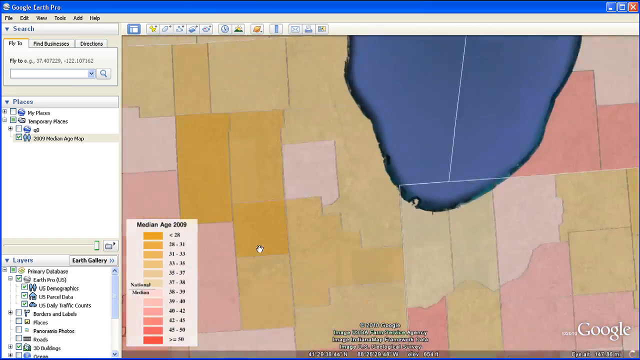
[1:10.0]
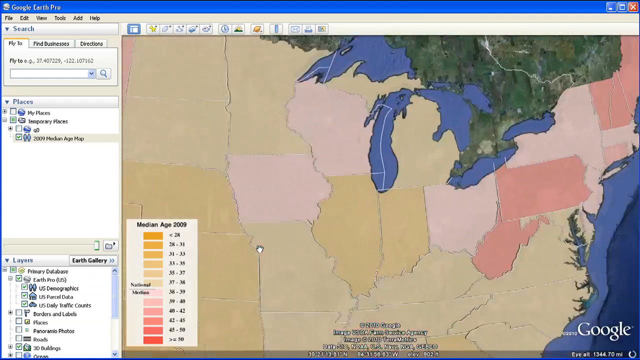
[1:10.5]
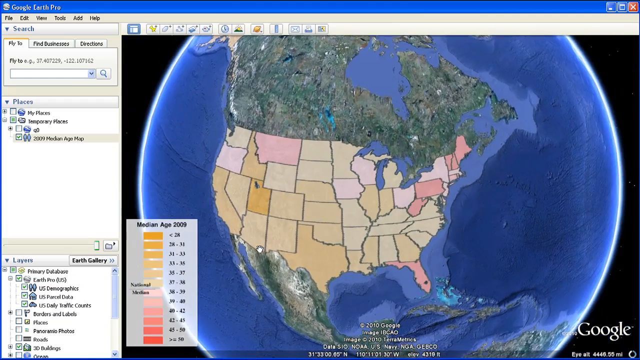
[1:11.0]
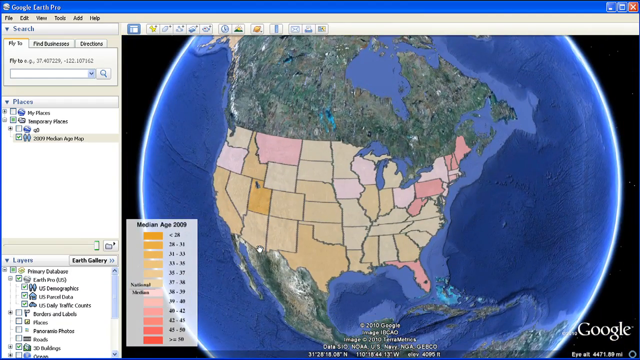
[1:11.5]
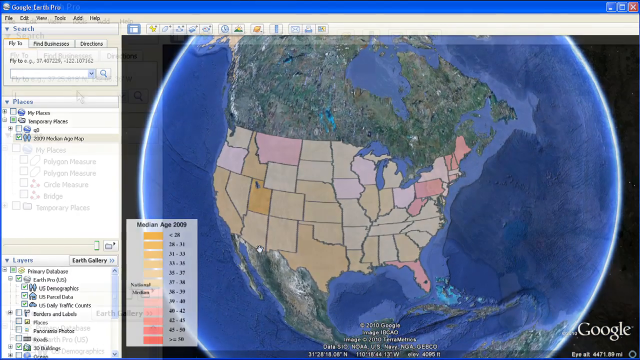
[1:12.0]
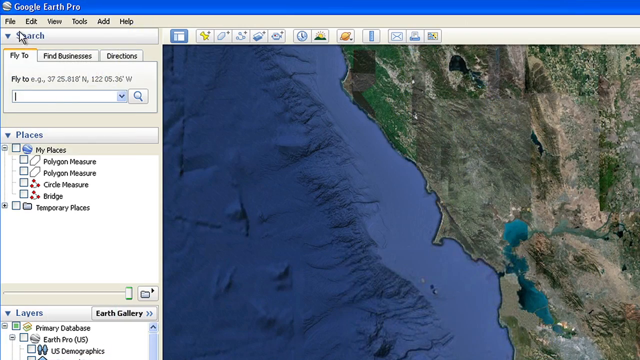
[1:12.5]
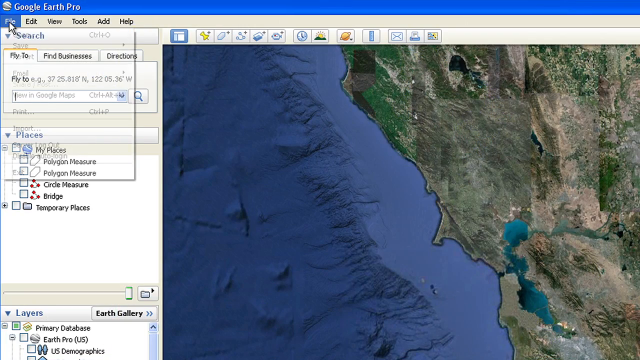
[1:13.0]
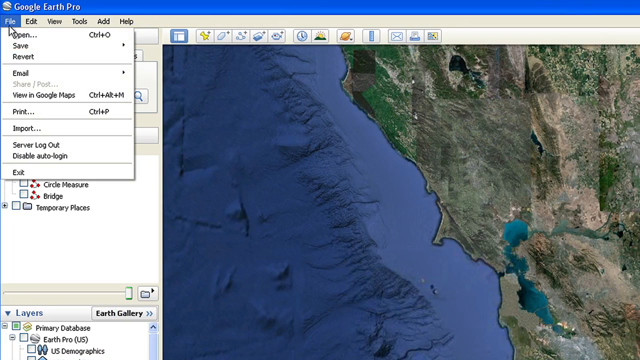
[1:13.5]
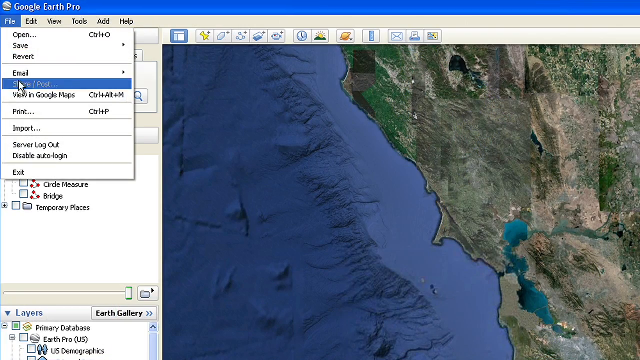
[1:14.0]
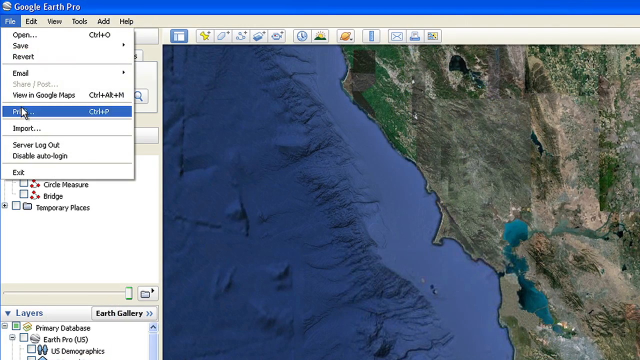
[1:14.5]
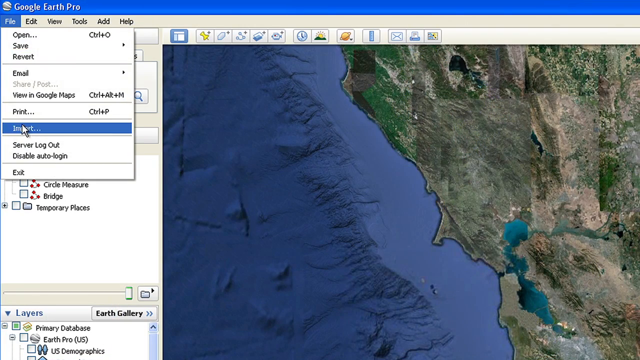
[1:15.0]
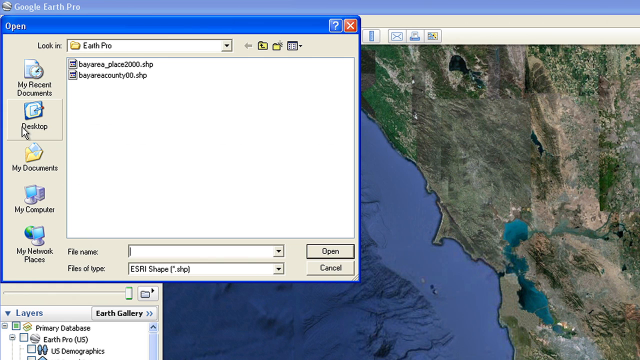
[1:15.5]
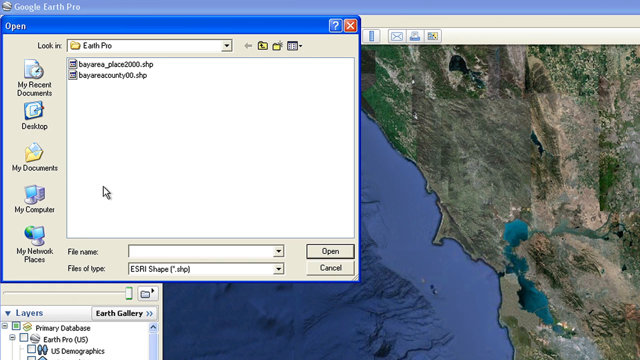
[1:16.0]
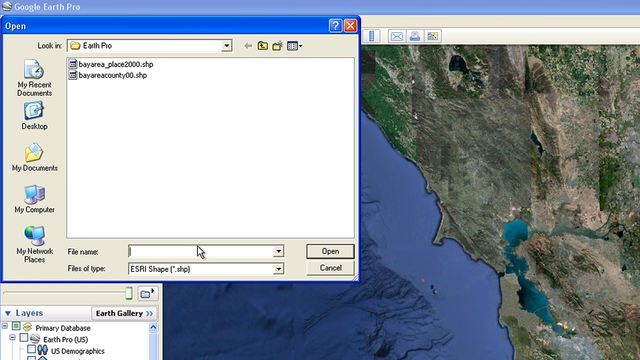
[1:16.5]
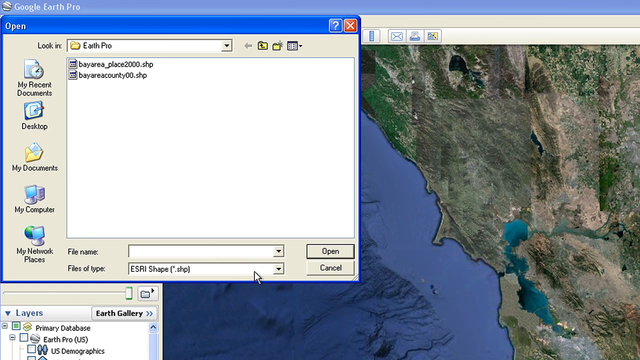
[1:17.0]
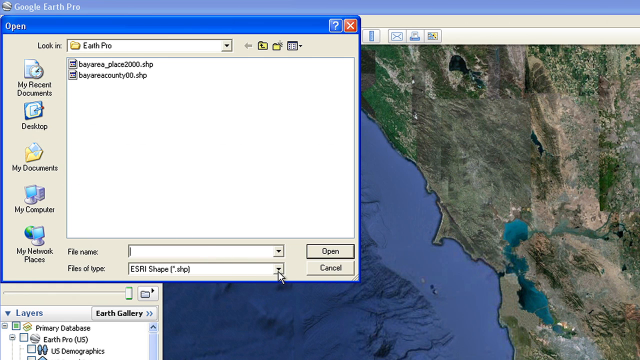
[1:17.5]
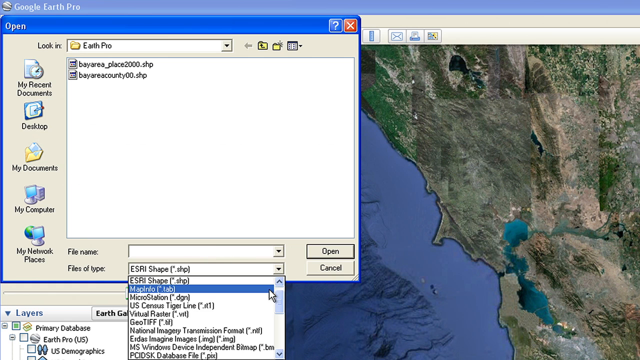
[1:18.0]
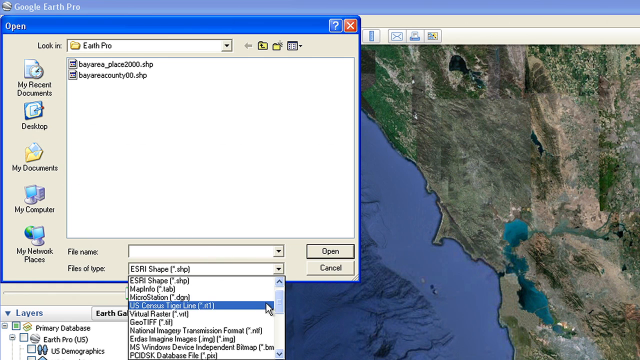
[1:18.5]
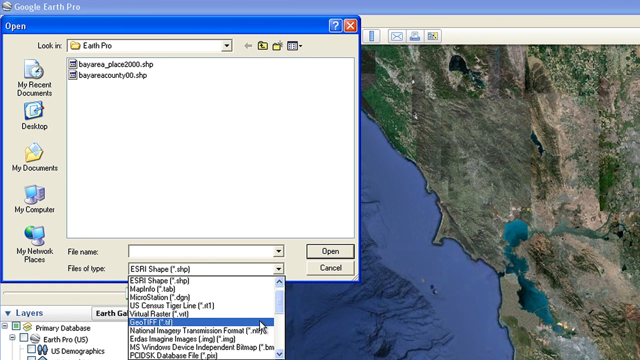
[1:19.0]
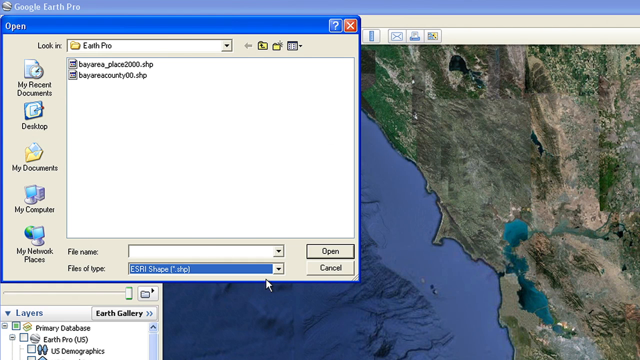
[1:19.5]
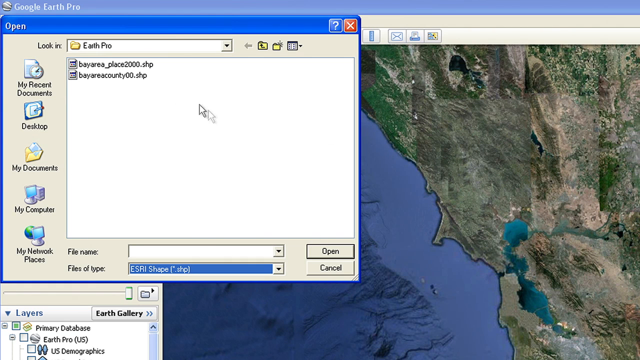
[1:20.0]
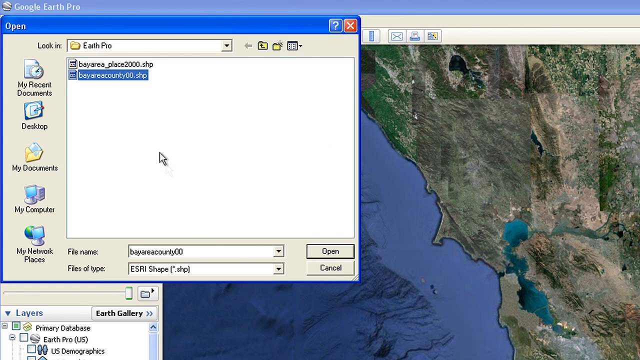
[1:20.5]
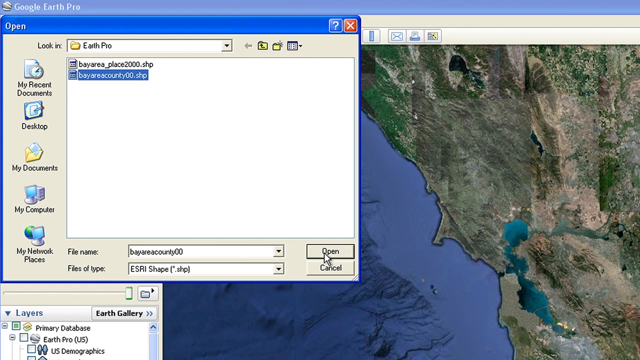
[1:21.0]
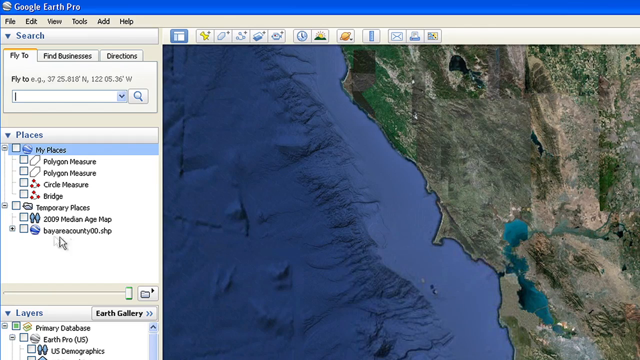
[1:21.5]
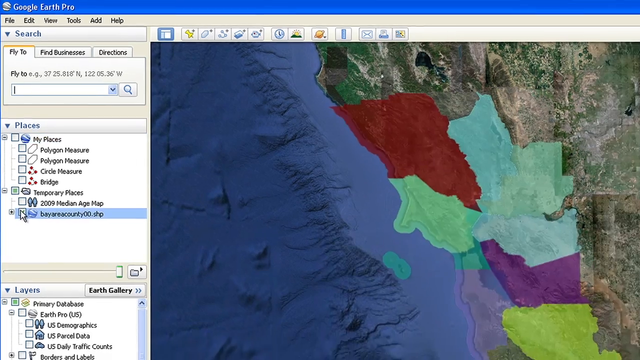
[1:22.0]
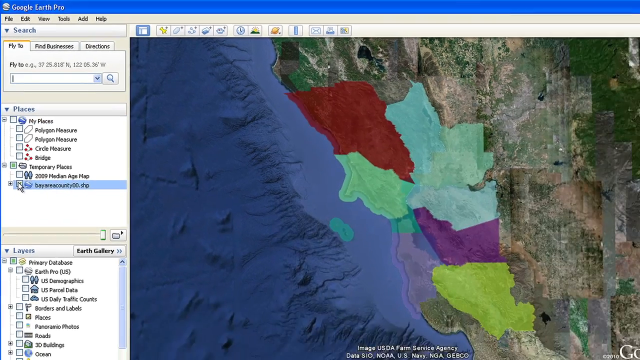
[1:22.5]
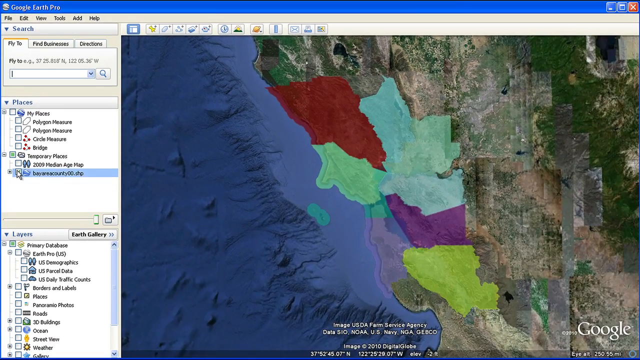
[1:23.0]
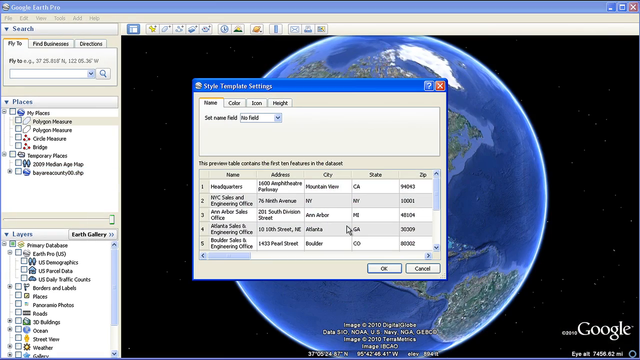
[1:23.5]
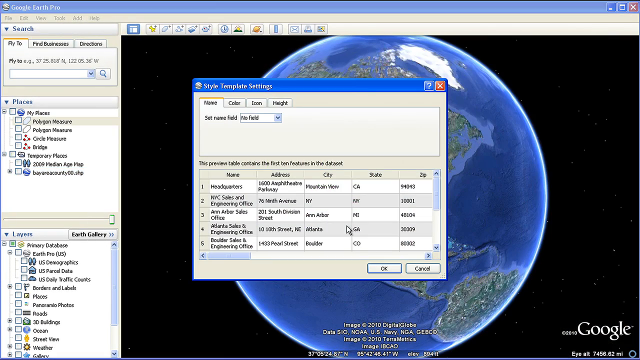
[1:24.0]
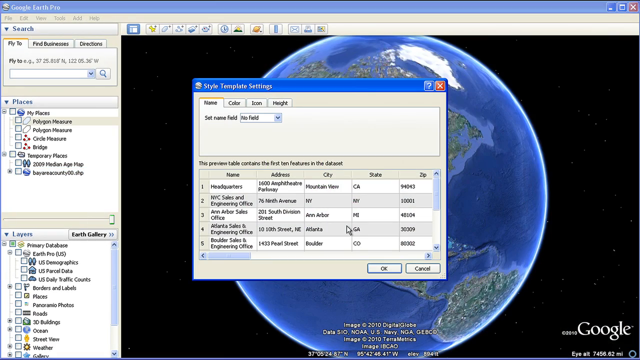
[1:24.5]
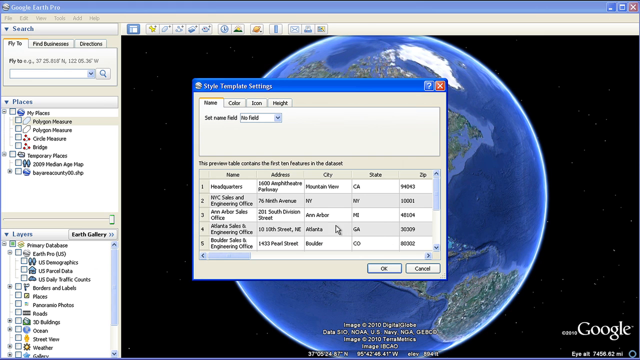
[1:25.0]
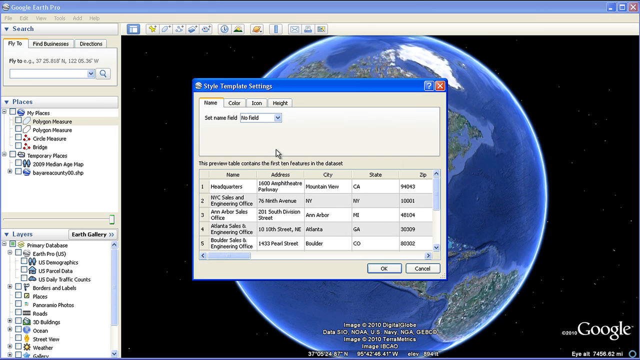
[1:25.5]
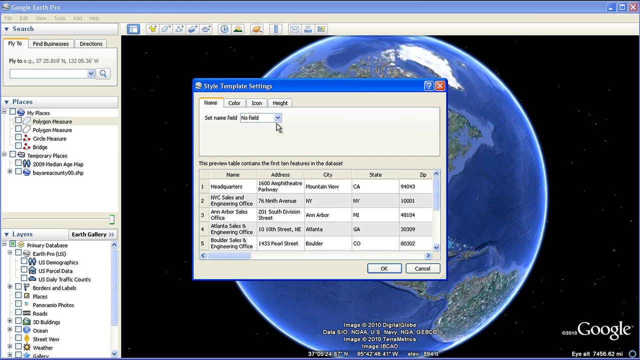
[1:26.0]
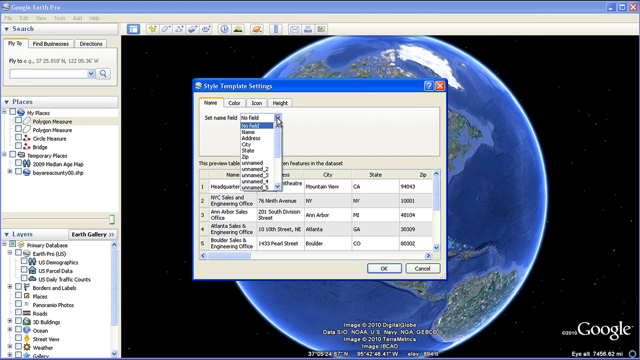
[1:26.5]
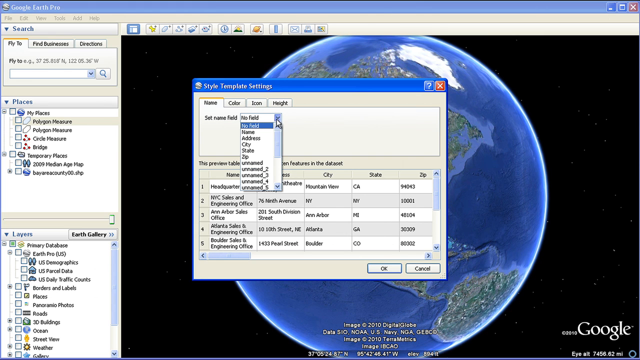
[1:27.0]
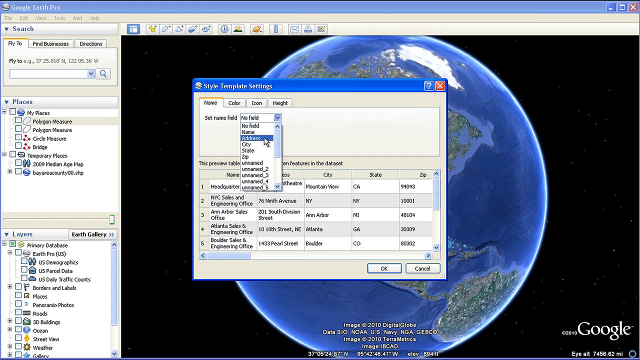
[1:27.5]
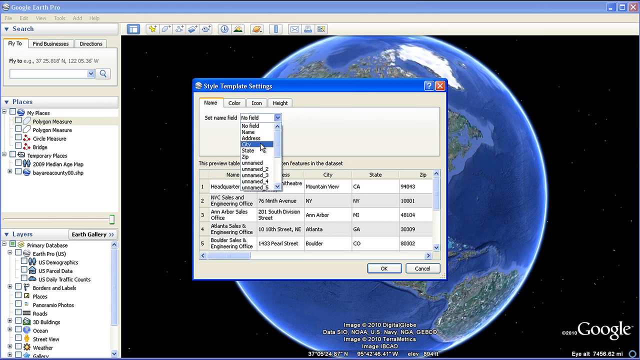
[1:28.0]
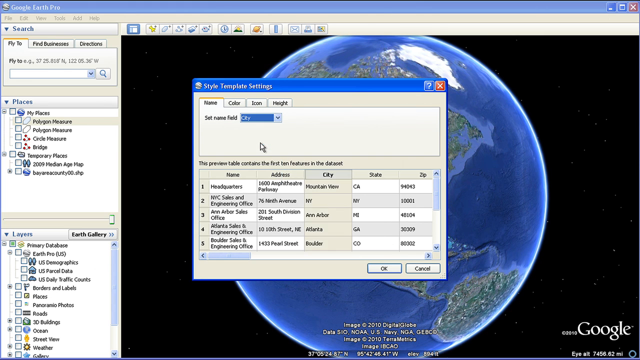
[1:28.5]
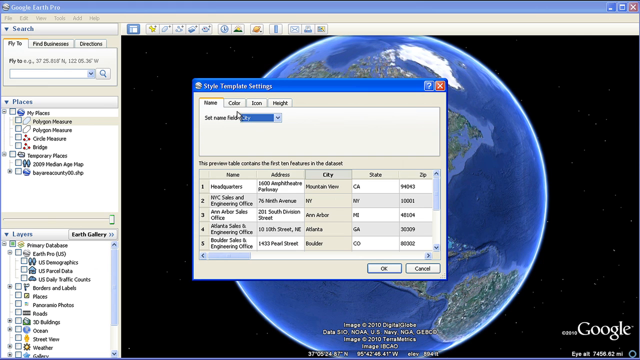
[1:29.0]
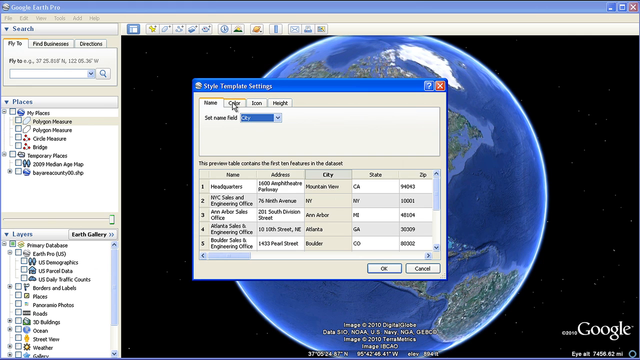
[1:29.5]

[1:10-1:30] A link that says "Download Map 2009 Median Age" is clicked. The maximized Google Earth Pro window appears again, showing a map covered with multiple yellow, pink to red squares representing different age groups. The view zooms out to a bigger view of the area in Illinois and eventually to a perspective of the Earth focused on America. Next, the top left part of the window is shown and the File tab is clicked, then Import, which brings up an open dialog. The files-of-type drop-down is changed to ESRI shape, a .SHP file, and the second of two files, "Bay Area County 00.SHP," is selected and opened. In the Places panel on the left there are two temporary places, one of which includes the newly added file. Its checkbox is checked so it is viewed on the map, and several areas are highlighted in different colors. A window called style template settings opens, the name field is changed to city, and the color tab is pressed.